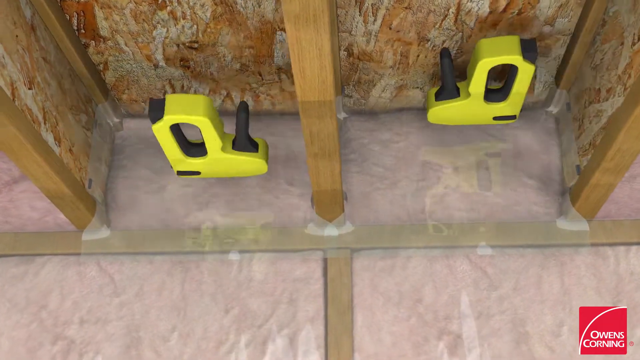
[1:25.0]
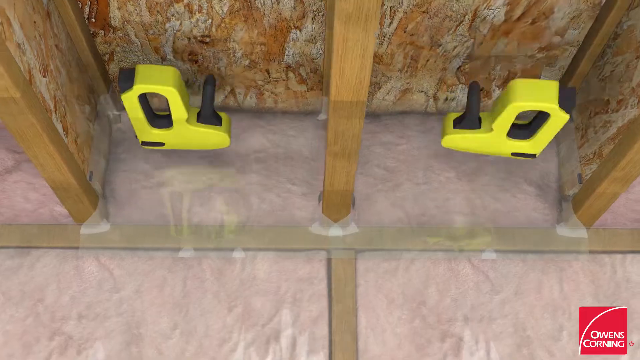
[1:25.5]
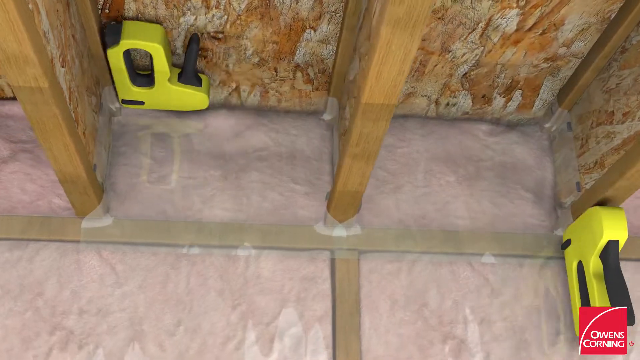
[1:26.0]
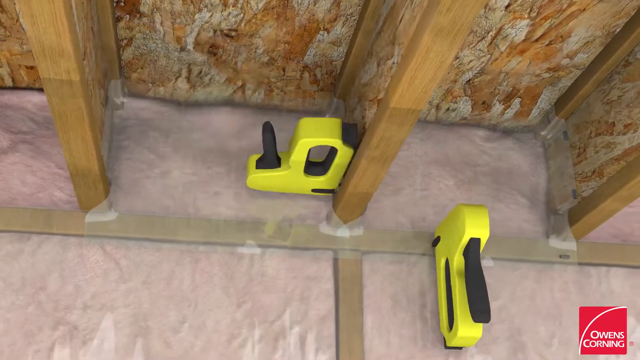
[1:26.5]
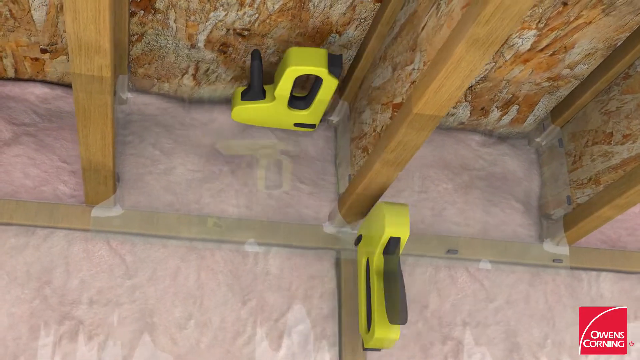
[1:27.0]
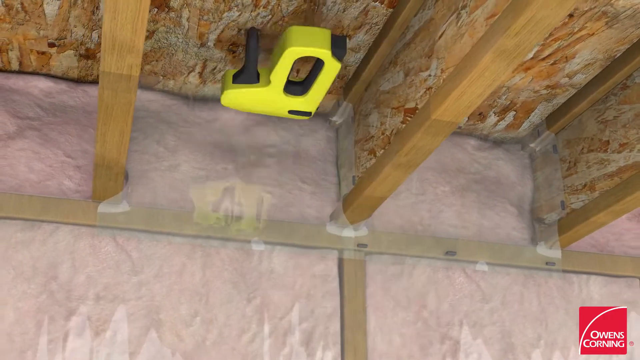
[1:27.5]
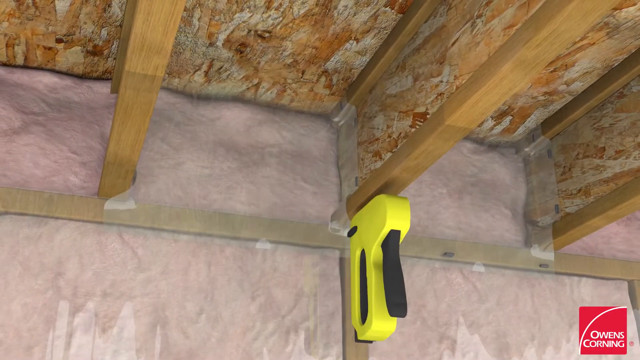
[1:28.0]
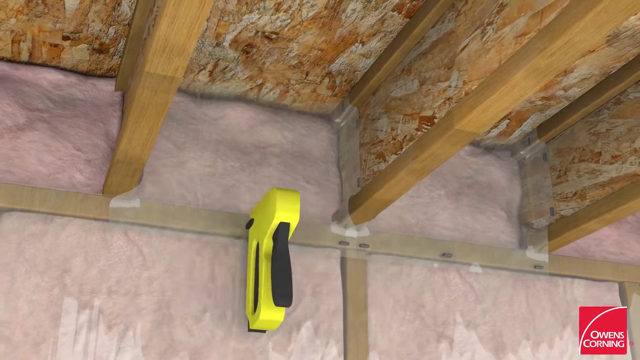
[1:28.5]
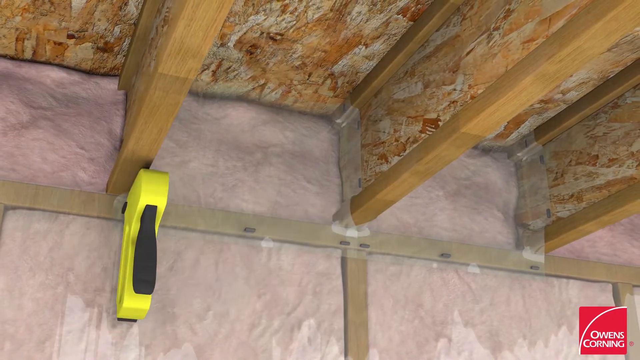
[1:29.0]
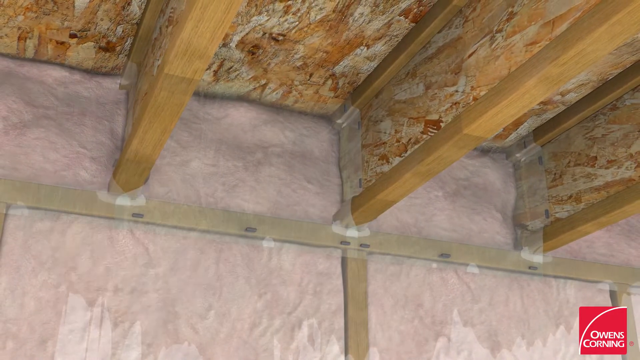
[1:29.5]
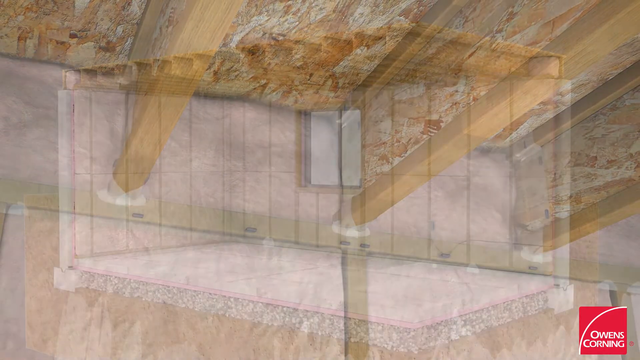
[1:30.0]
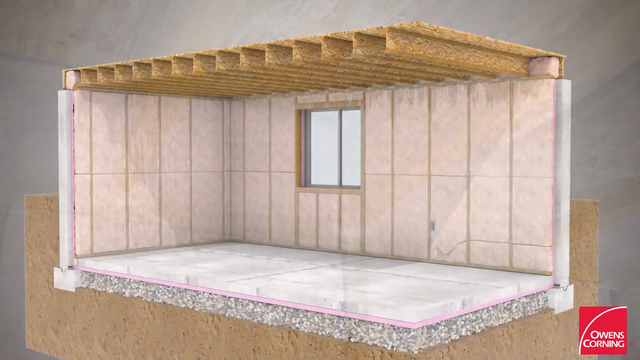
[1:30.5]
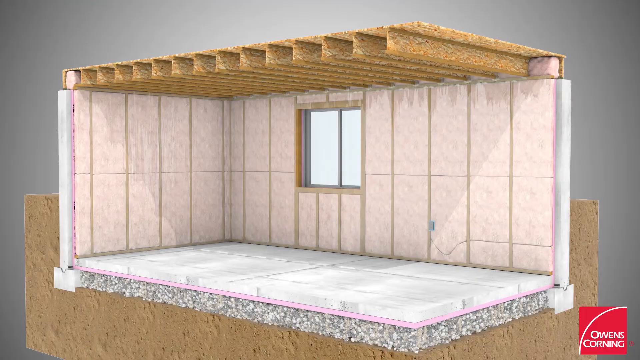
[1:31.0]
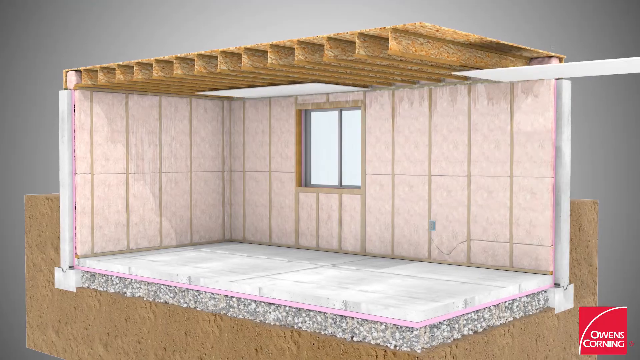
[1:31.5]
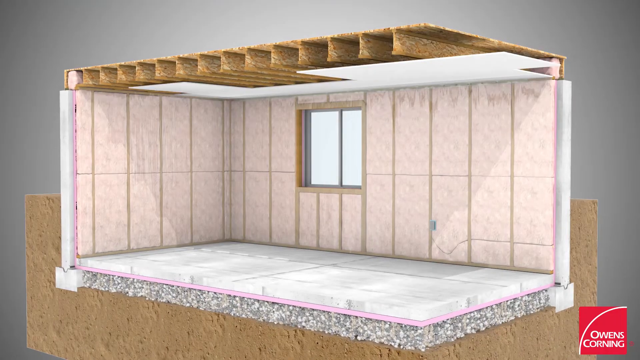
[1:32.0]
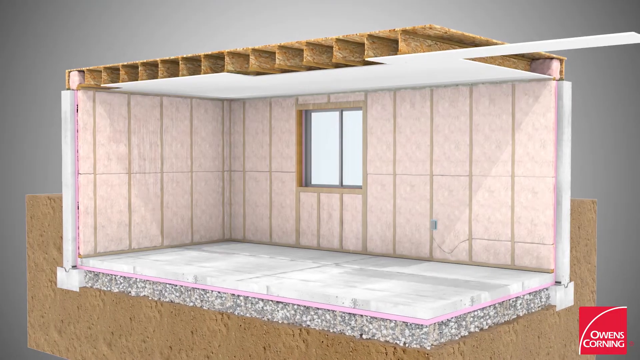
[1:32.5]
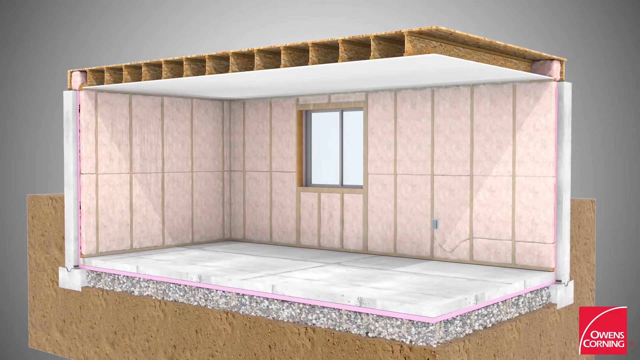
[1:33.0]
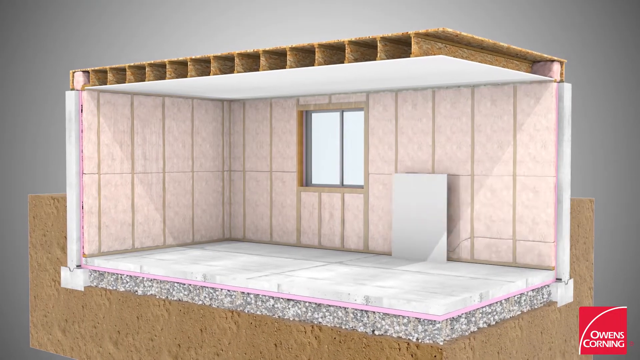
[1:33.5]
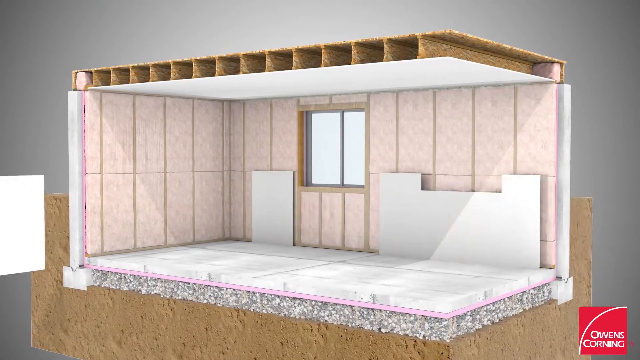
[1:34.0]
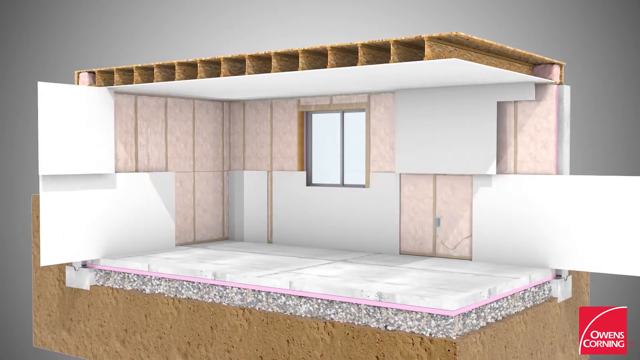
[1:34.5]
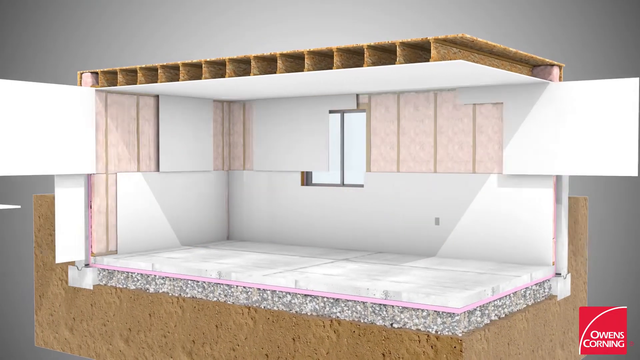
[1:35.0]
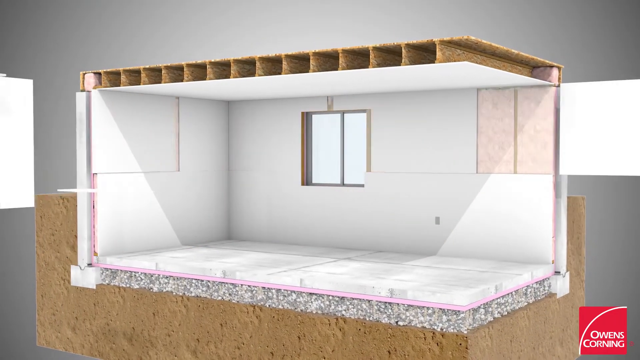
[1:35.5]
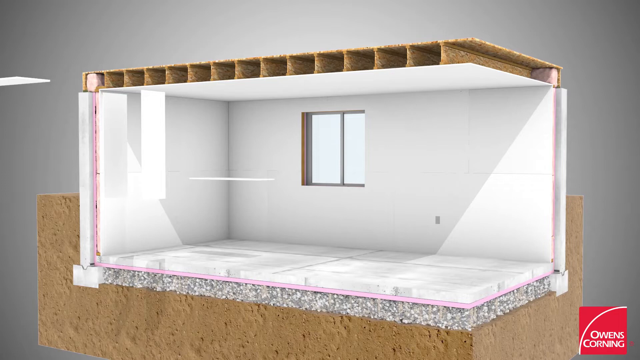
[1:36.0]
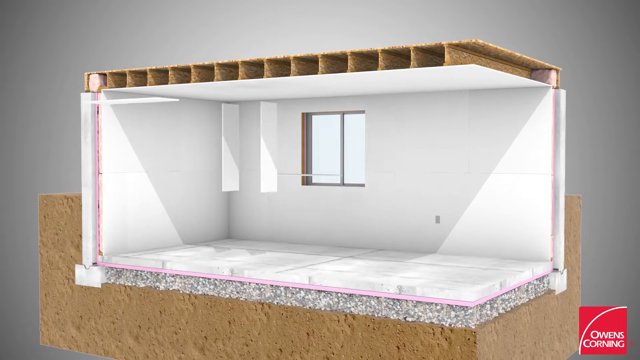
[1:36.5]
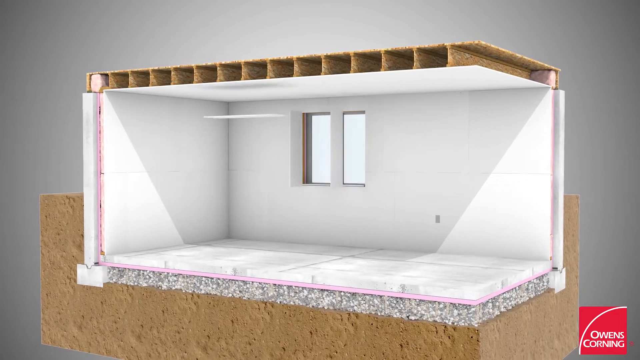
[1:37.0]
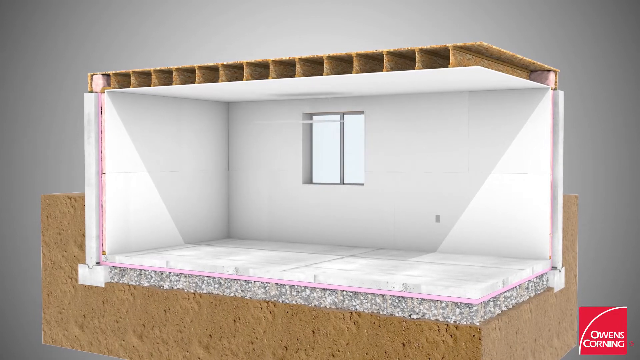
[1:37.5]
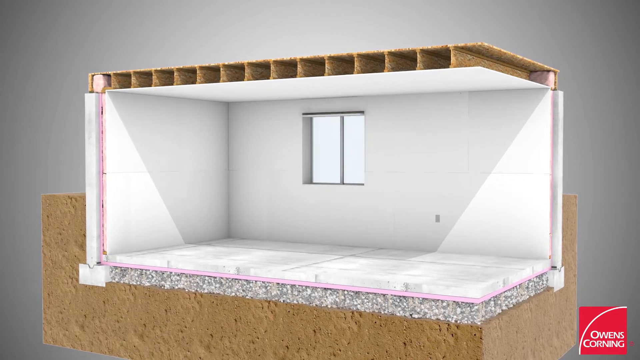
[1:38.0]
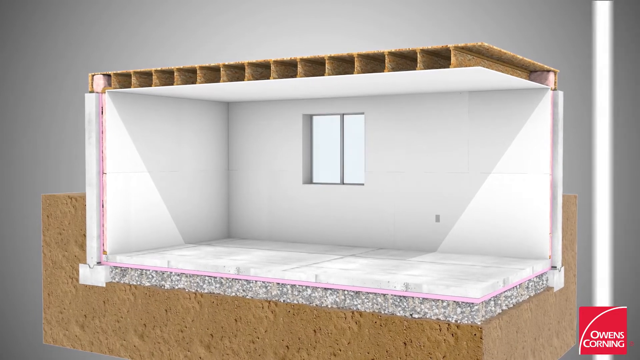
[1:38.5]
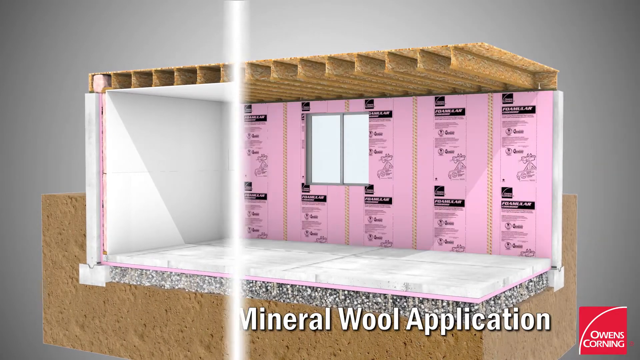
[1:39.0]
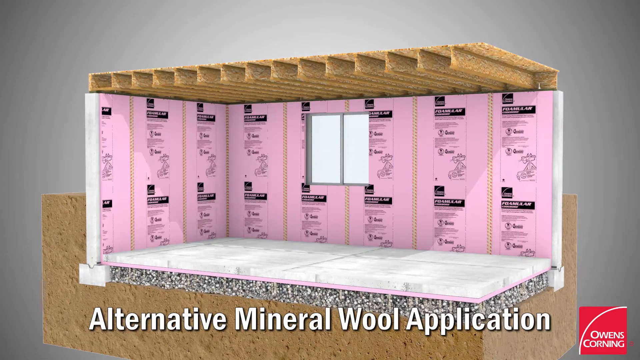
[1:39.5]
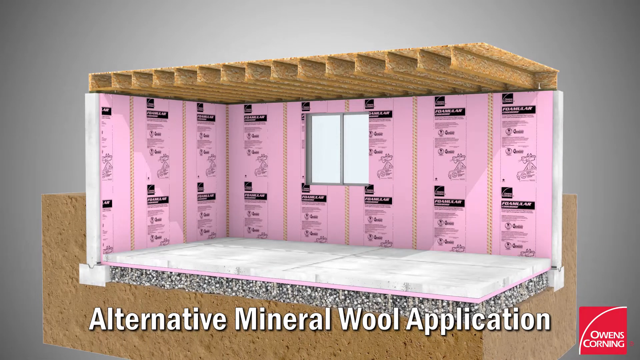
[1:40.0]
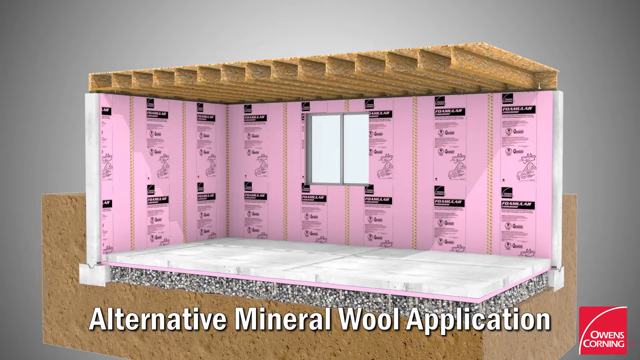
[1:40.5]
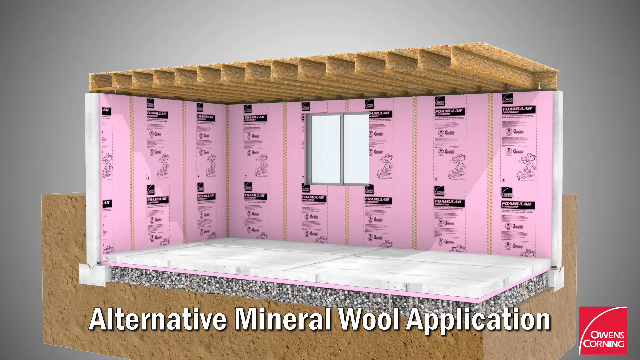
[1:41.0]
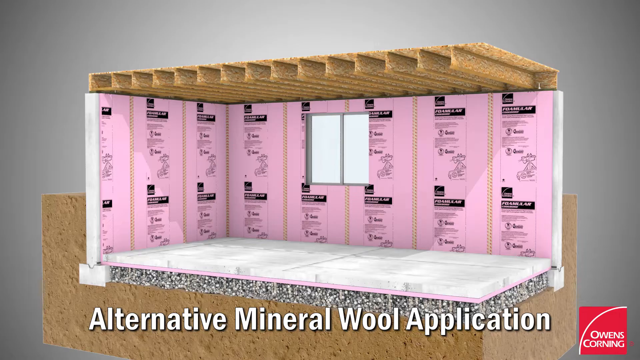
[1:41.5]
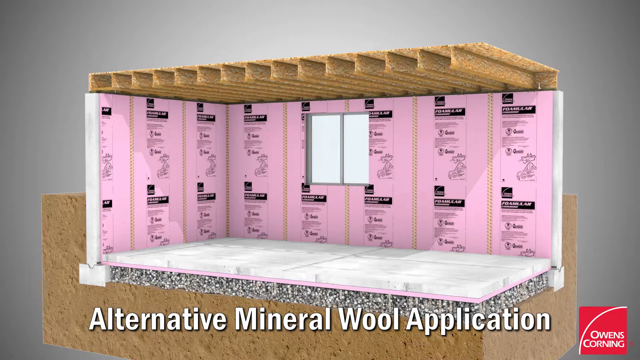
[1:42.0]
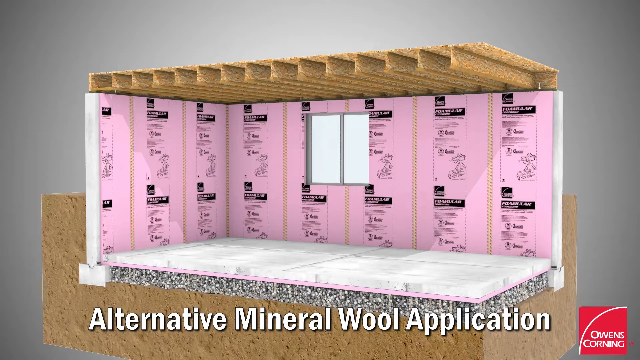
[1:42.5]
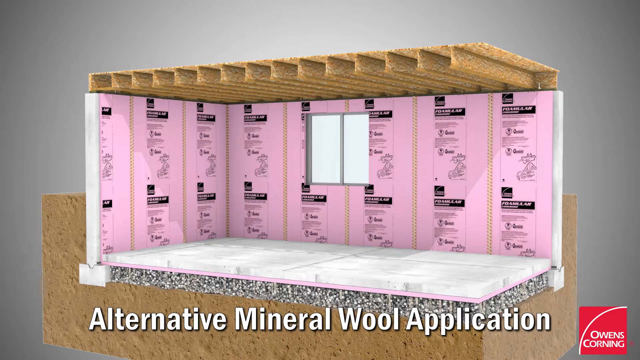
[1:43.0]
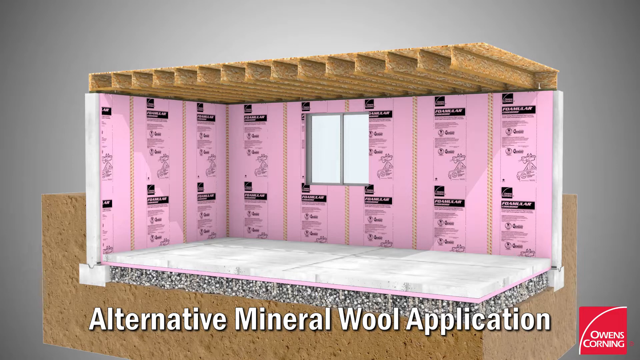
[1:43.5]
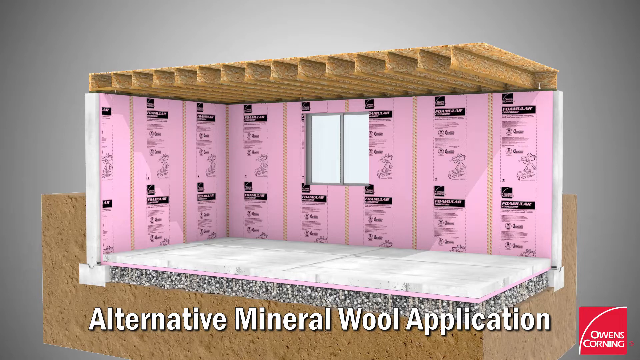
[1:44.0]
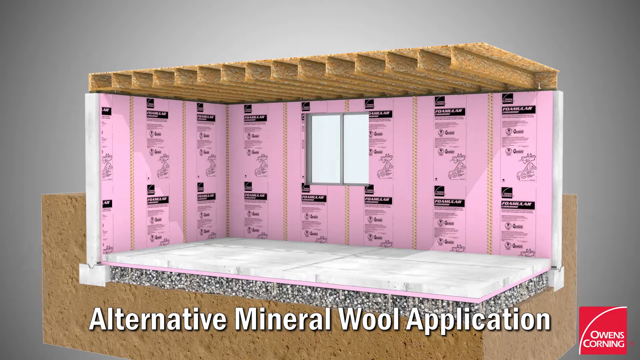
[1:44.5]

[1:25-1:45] In a 3D-rendered room, a plastic membrane is put over the framing, apparently a moisture barrier to keep moisture out. The room is then seen from far away, covered in drywall as if finished. Text reads "alternative mineral wool application." There is pink insulation foam in the walls, and a gray product is placed between the beams of the ceiling framing. The wall framing is shown, and the material is packed into it almost like a puzzle. The view flies around the room. A piece of membrane rolls itself out over the joists, and it looks like clear plastic, almost like Saran wrap. A side-by-side of "fiberglass application" and "alternative mineral wool application" follows, and then the Pink Panther appears with "Owens Corning building solution." The pink material is shown in the wall framing and ceiling joists, drywall is applied, and "alternative mineral wool application" appears.